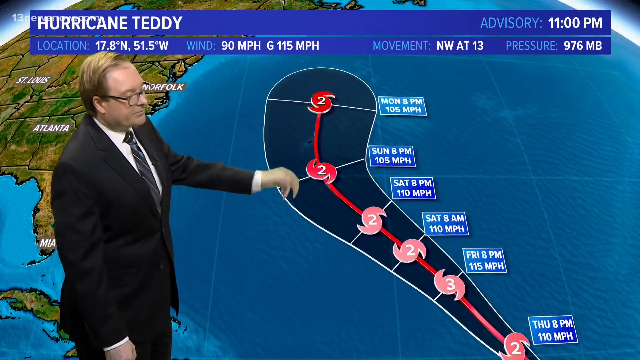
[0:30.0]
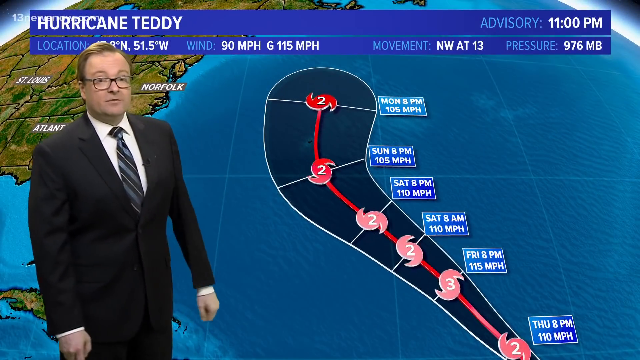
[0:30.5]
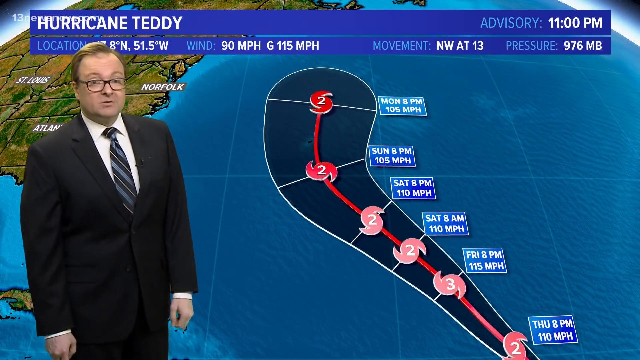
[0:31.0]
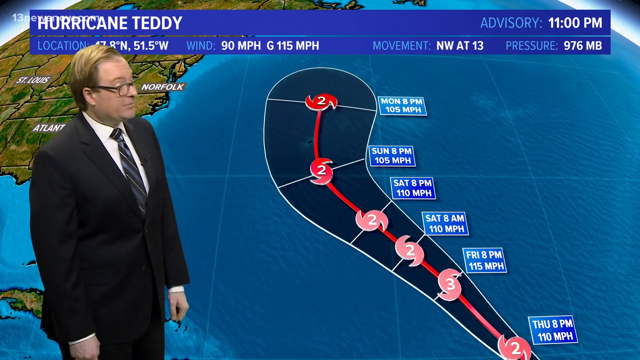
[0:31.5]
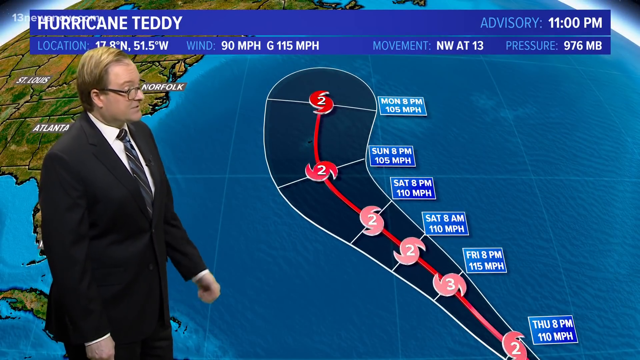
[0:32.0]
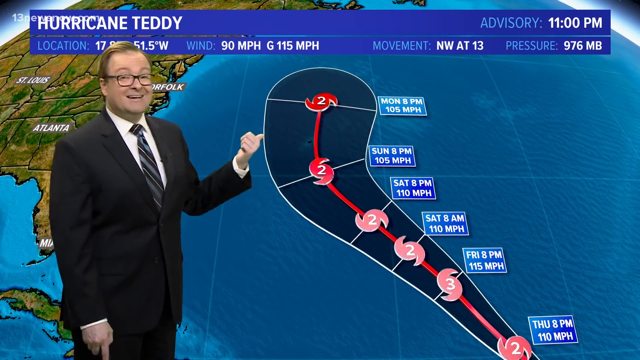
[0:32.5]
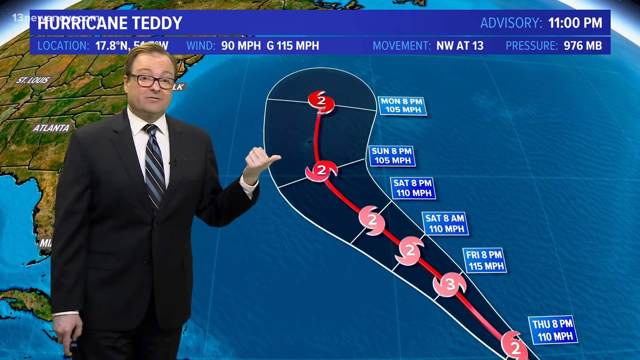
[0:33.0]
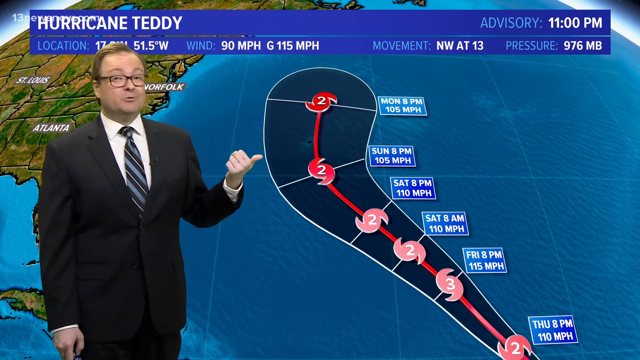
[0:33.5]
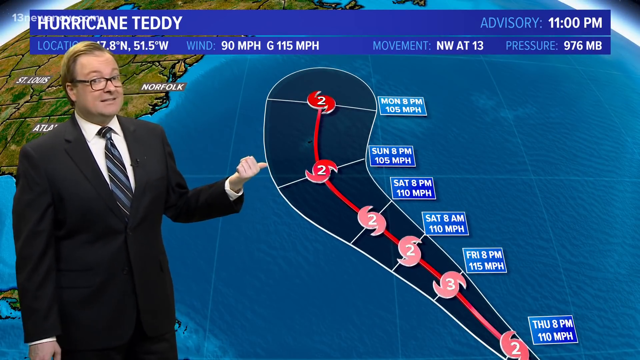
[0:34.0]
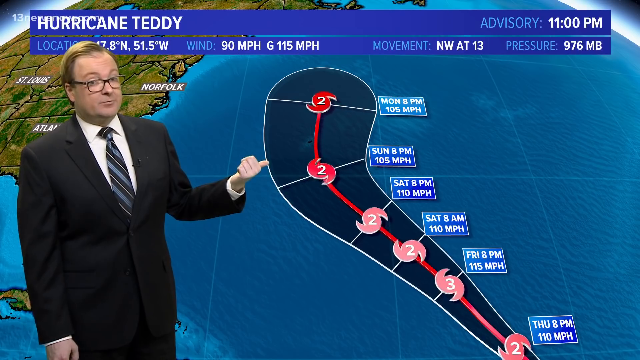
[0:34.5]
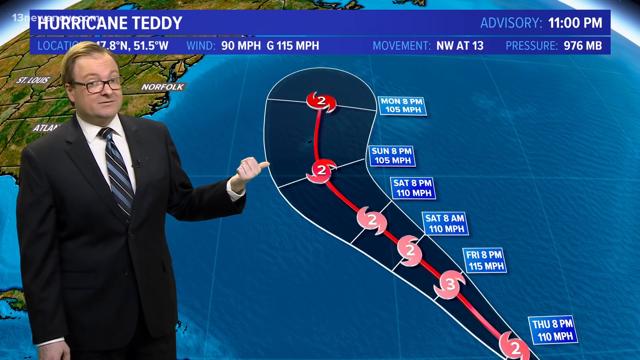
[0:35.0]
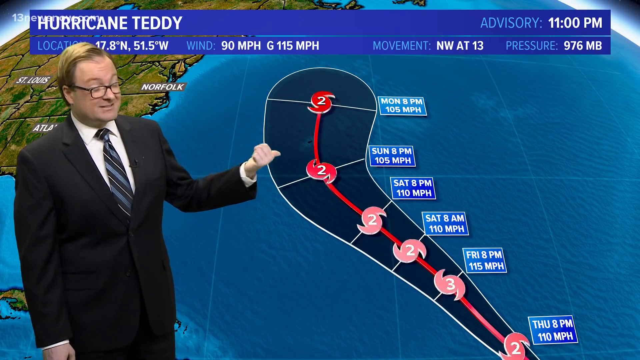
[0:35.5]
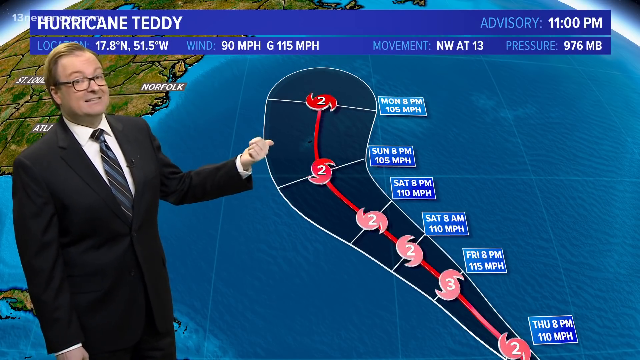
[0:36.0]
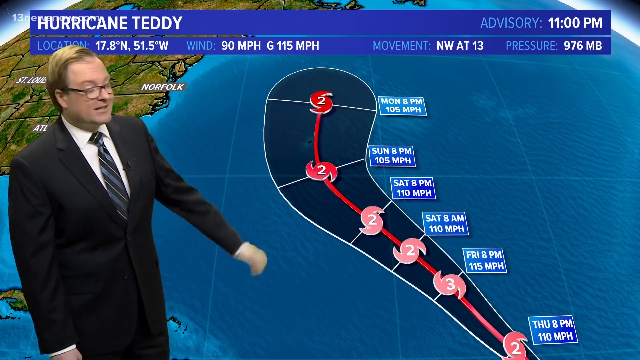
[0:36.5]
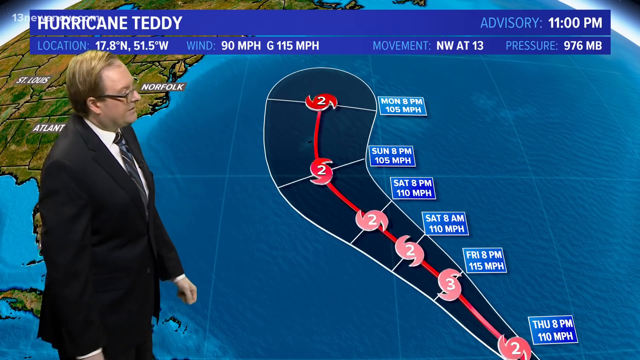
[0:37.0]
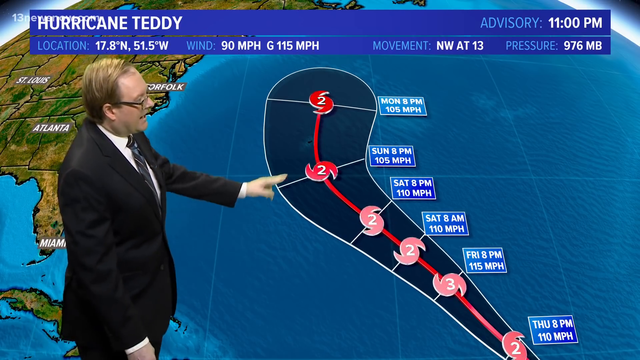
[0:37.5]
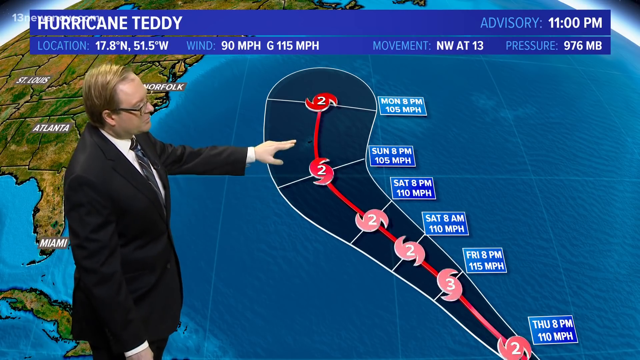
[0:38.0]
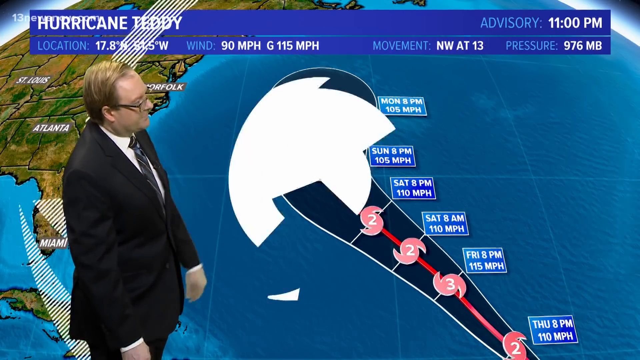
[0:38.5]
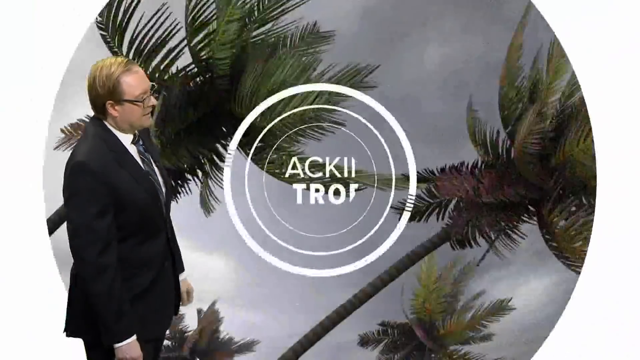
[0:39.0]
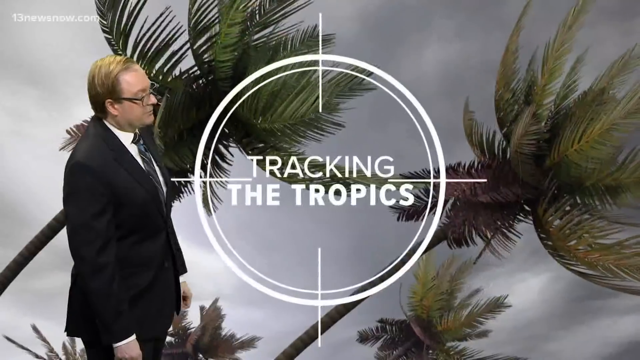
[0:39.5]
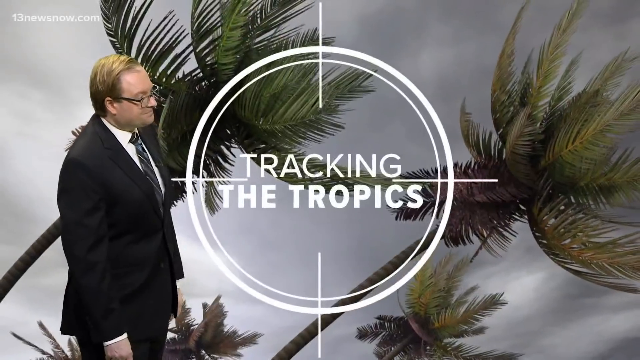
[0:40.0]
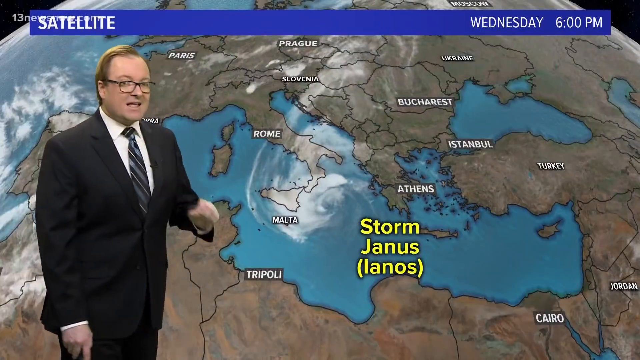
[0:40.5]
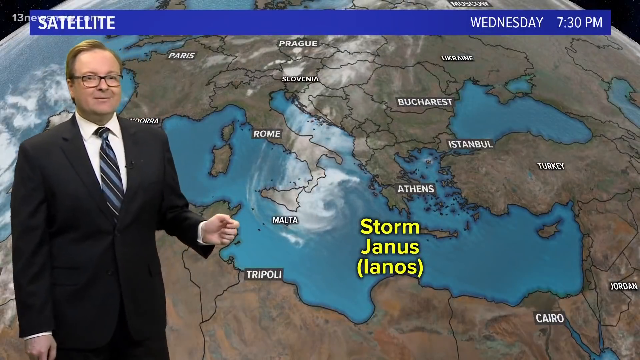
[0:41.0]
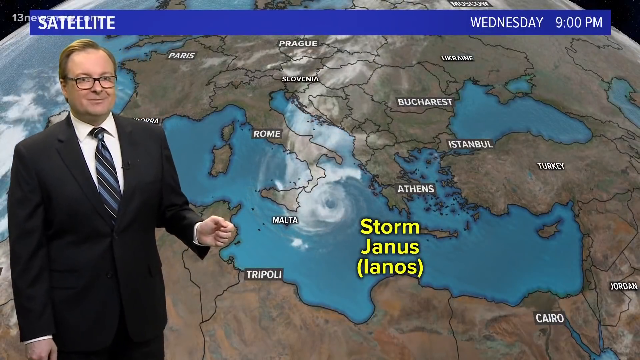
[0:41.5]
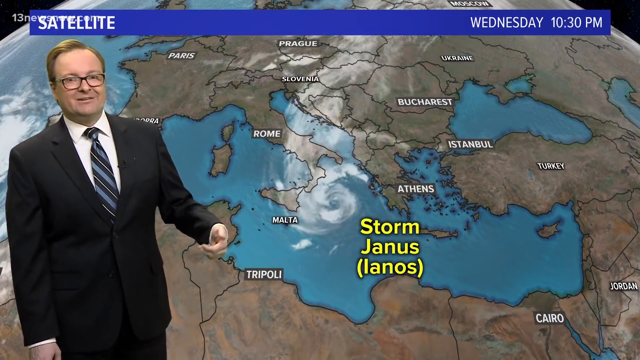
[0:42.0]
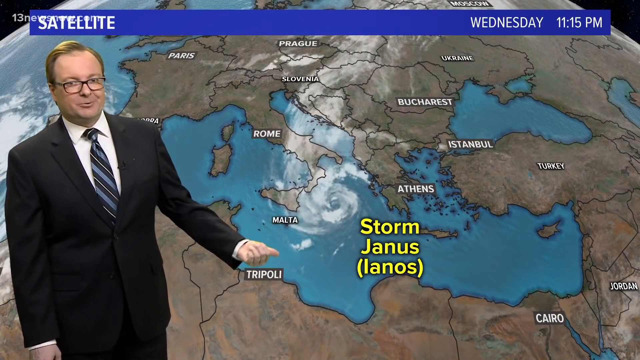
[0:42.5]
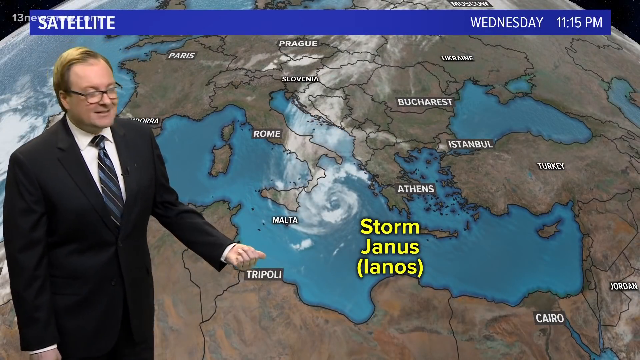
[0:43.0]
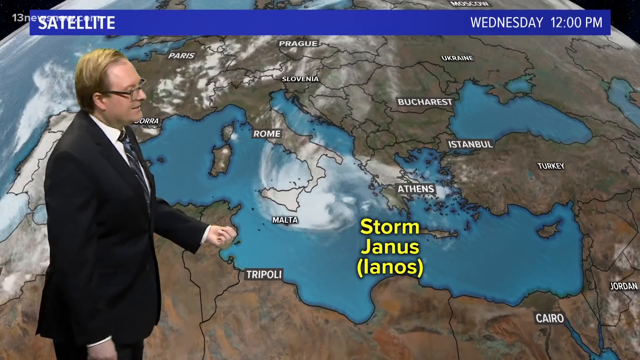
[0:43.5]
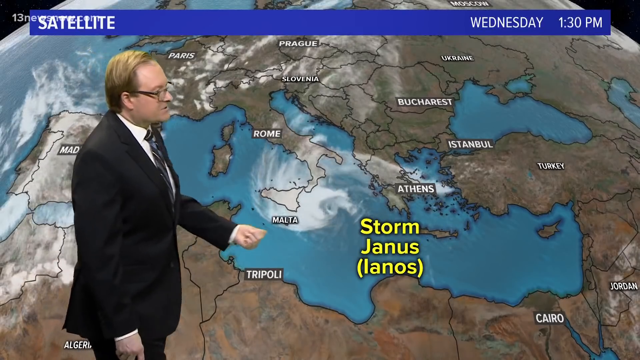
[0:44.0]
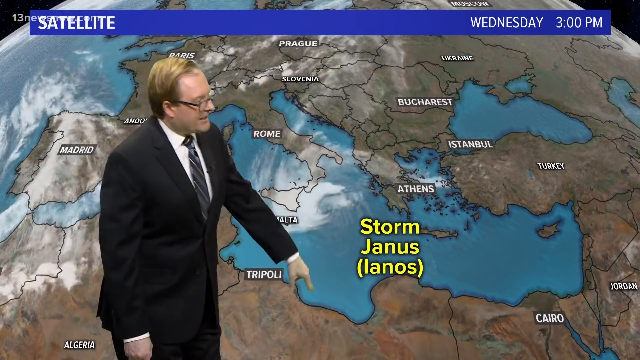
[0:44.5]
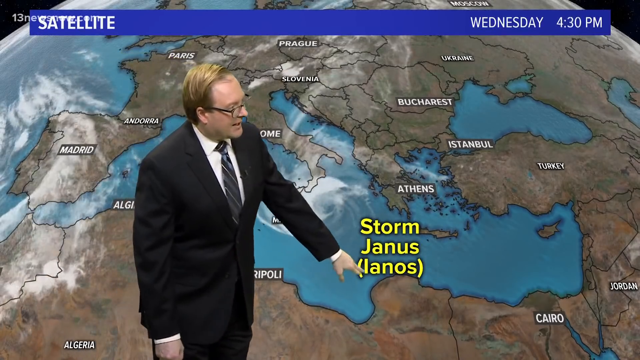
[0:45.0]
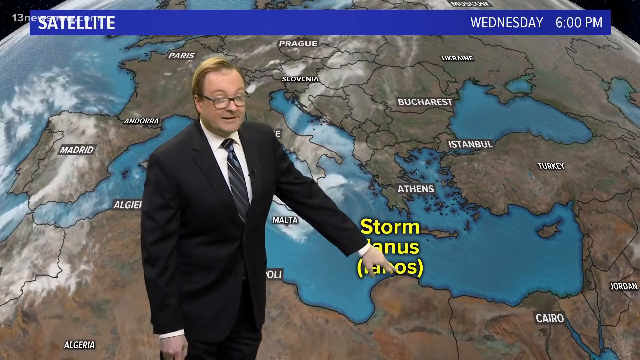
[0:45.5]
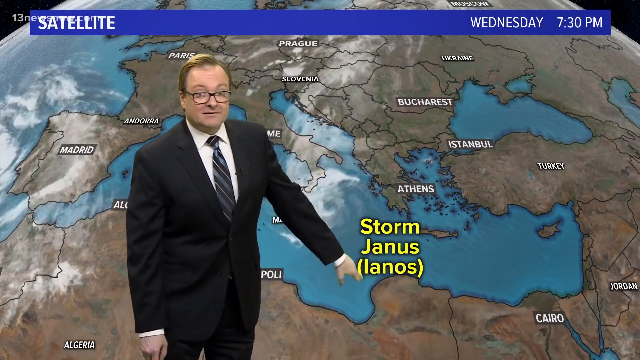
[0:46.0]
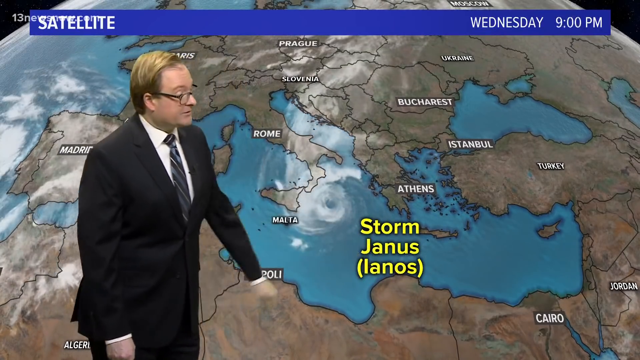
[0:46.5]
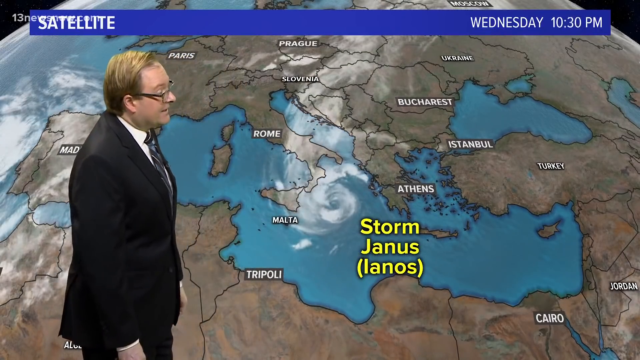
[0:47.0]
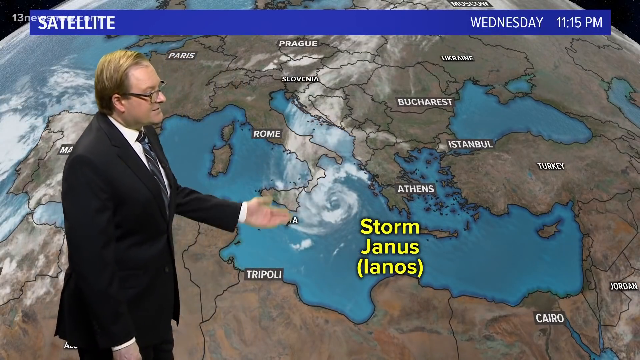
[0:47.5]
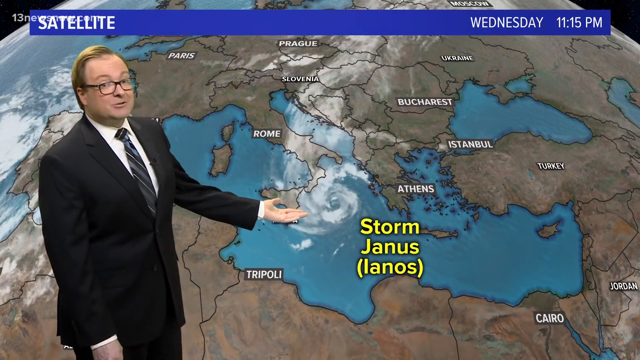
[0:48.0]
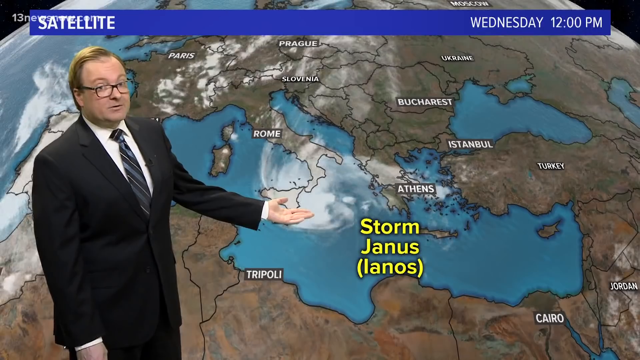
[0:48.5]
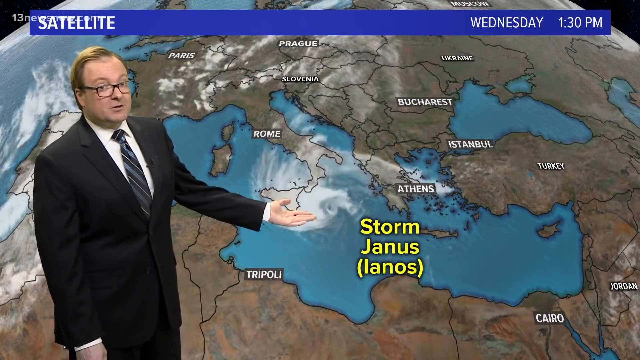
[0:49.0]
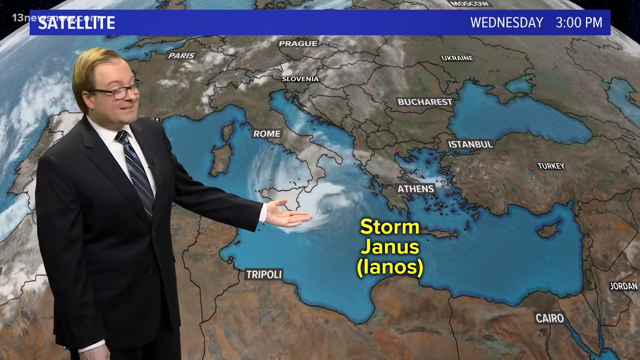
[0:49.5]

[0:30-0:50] The man is now presenting a satellite view, with the day shown as Wednesday and the time as 6:15 p.m. The map shows various places, including Turkey, Istanbul, Athens, Paris, Ukraine, Tripoli, Cairo and Malta. The countries are in brown, blue represents water bodies, and black borders separate the countries and cities. Text about storm Janus is highlighted in yellow in a large font. The man repeatedly emphasizes one place, Athens.